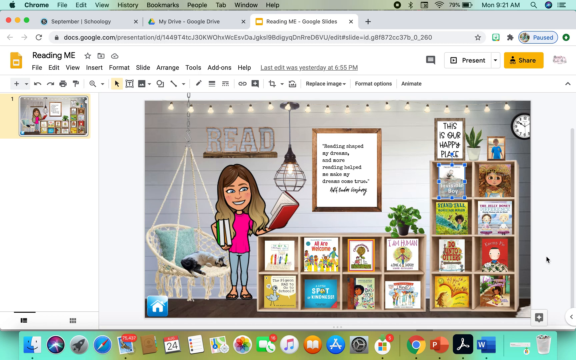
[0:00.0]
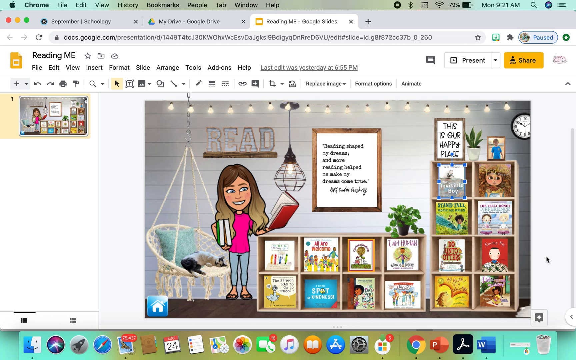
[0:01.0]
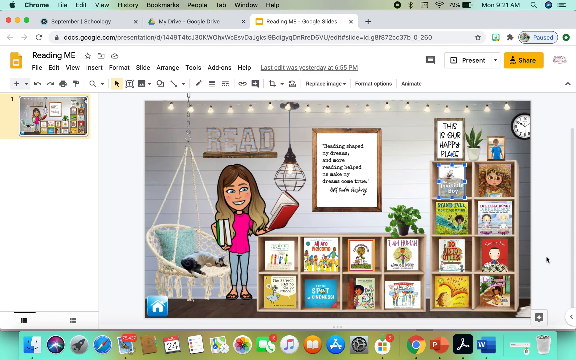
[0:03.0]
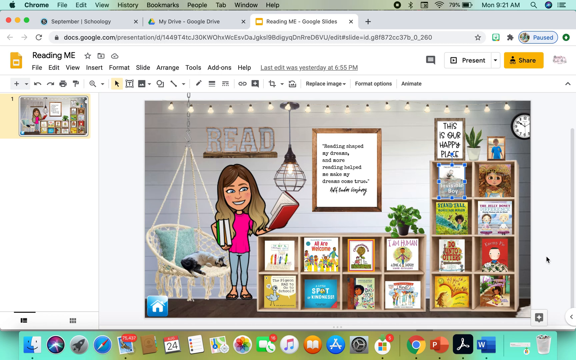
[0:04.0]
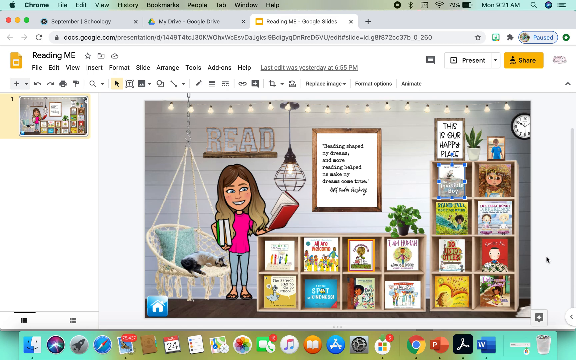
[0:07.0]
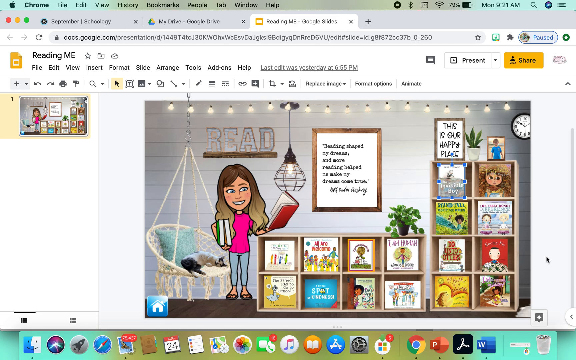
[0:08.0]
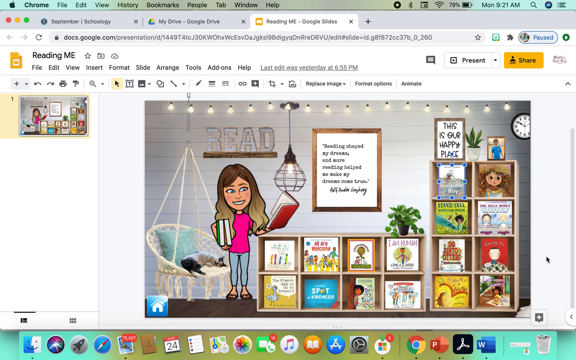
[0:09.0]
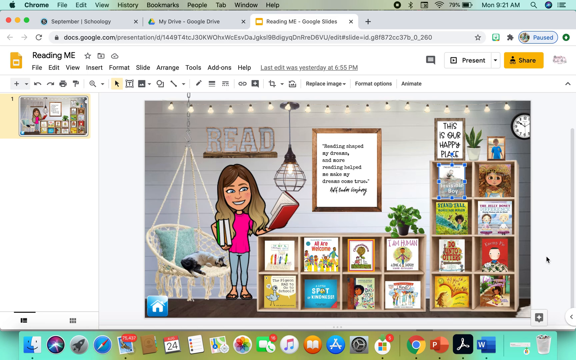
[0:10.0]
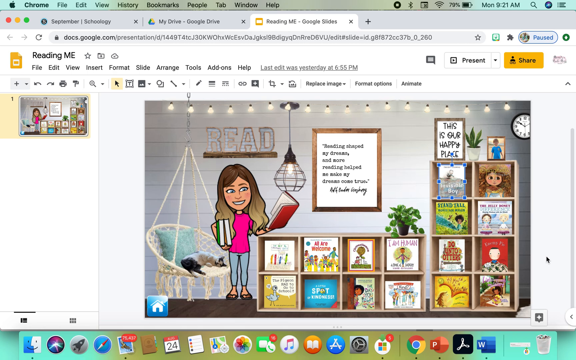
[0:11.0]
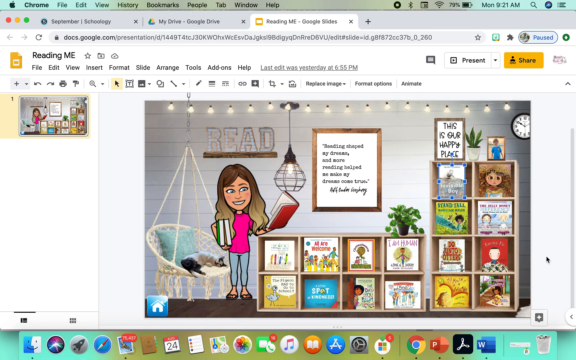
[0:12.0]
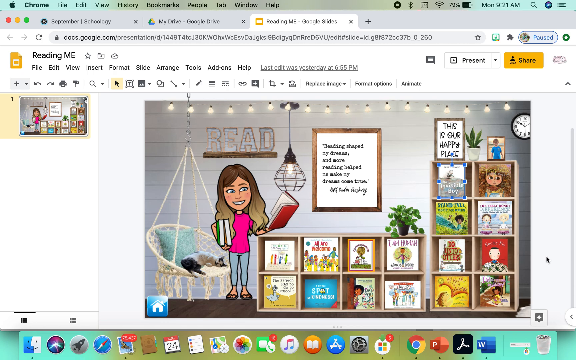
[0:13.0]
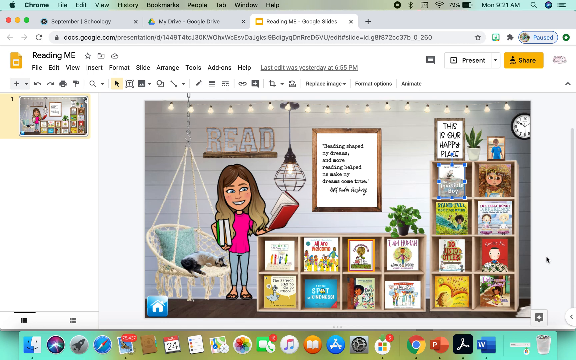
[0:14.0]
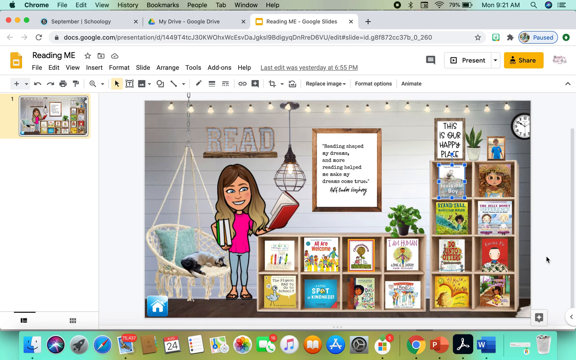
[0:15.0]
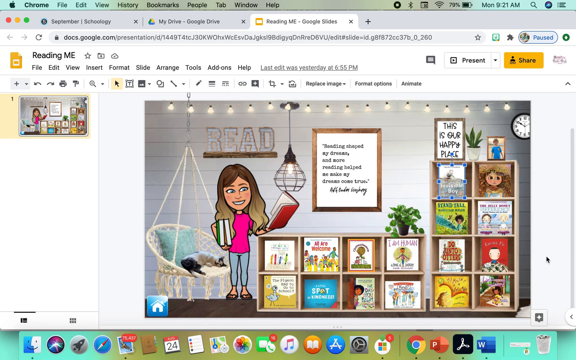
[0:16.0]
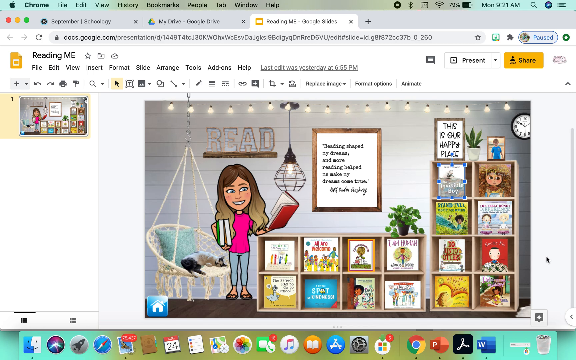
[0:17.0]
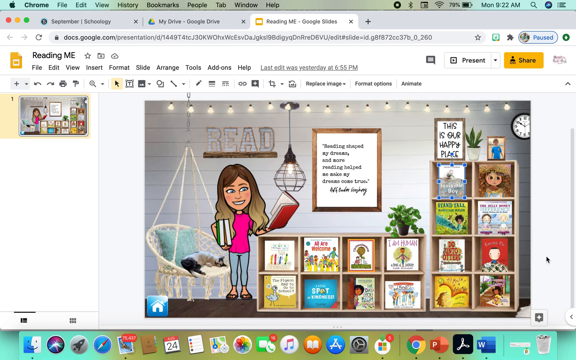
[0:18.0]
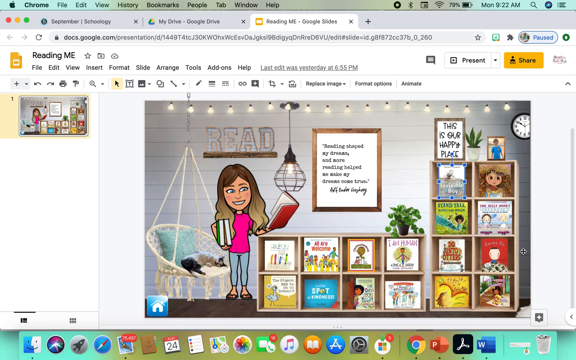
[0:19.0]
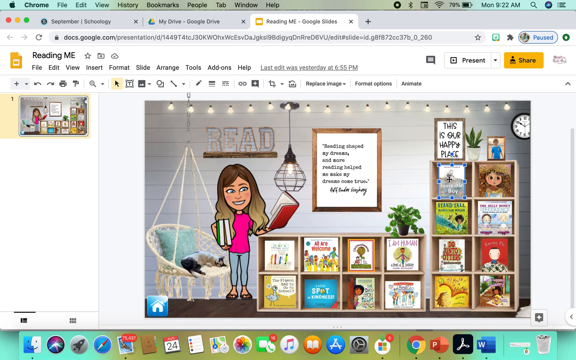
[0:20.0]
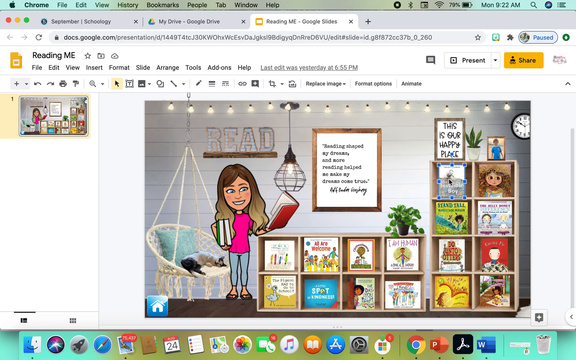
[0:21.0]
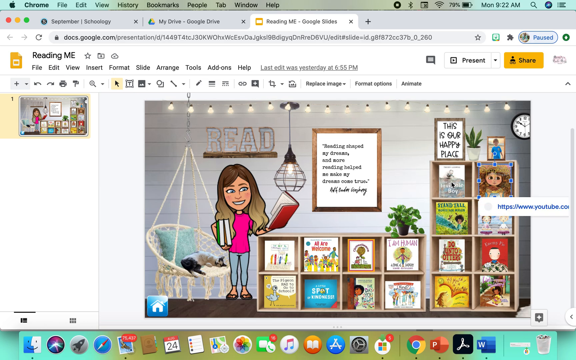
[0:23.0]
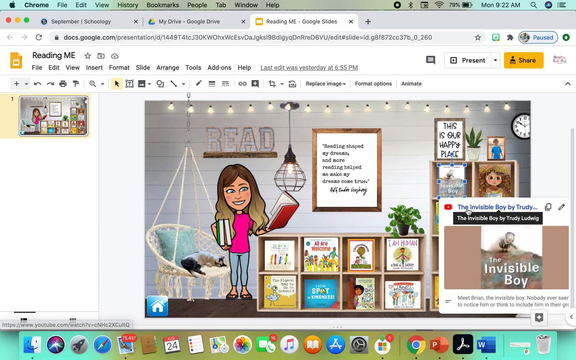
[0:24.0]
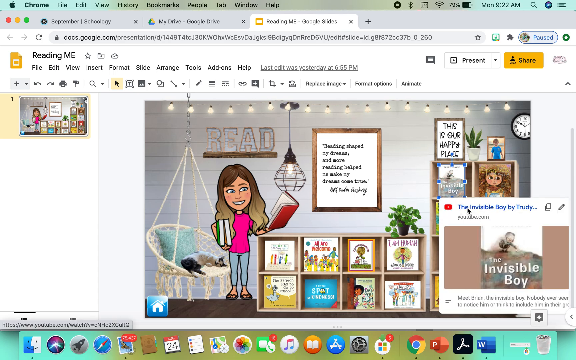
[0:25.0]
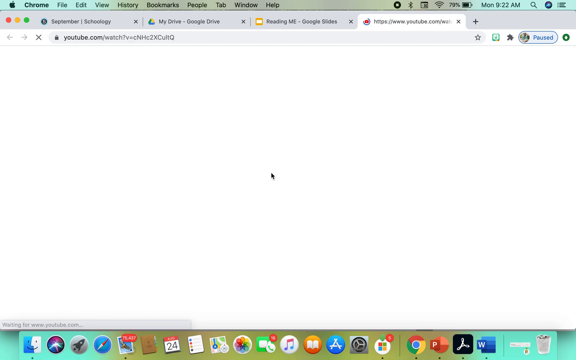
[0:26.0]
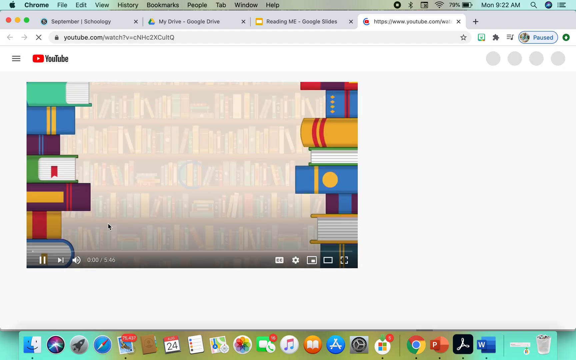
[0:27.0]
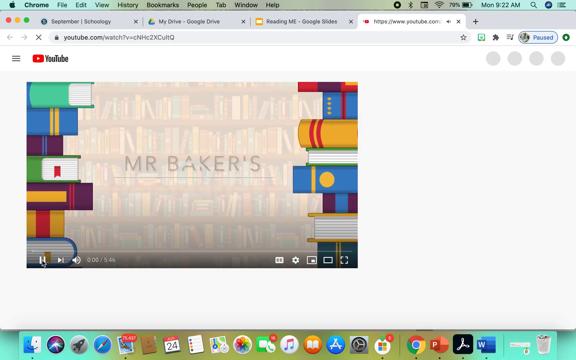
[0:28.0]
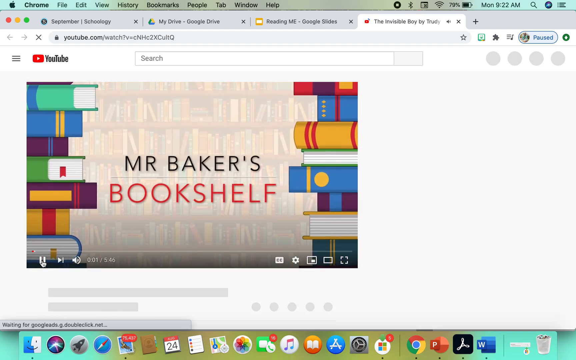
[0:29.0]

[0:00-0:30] A Safari browser is open with three tabs: a "September Schoology" tab, a "My Drive" Google Drive tab, and one called "Reading ME" in Google Slides. The video is on the Google Slides tab, which shows a slide creation that looks like a bedroom for a teenage girl. A cartoon character who looks like a girl with long hair has books in her arms and is standing next to a hanging seat with a cat on it. Next to her are two cubed shelves, each cube holding an individual book. On the far right shelf, one of the books shows a blue edit interface, apparently meaning the books can be moved around on the slide. The page stays like this for about 20 seconds. The user then hovers over that book, moves to a second book, and then back to the first book. They click on it, and a window pops up from YouTube that says "The Invisible Boy by Trudy," with a picture included in the description. They click the YouTube link, which opens another tab.